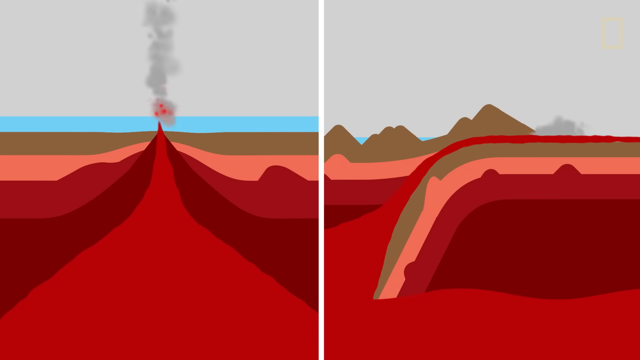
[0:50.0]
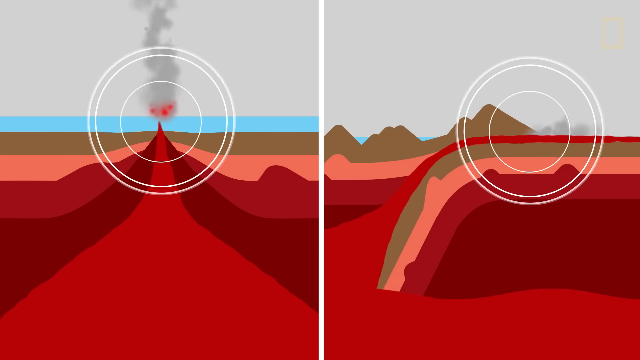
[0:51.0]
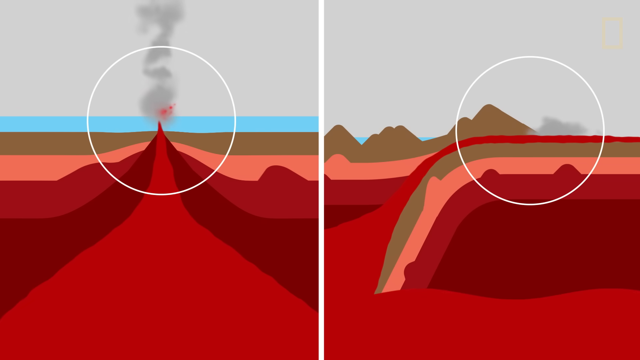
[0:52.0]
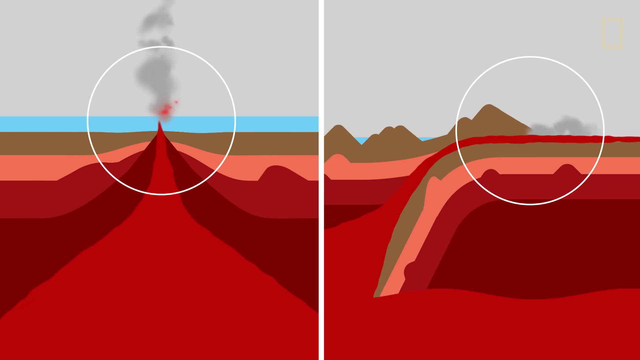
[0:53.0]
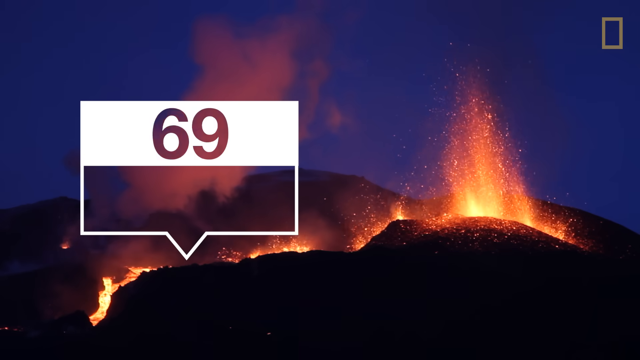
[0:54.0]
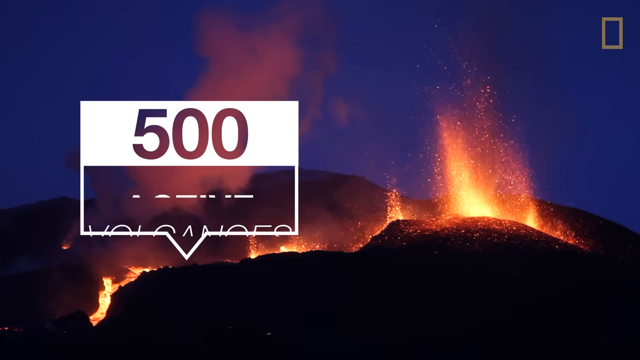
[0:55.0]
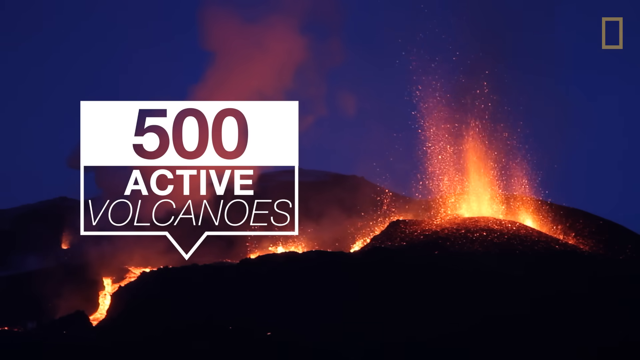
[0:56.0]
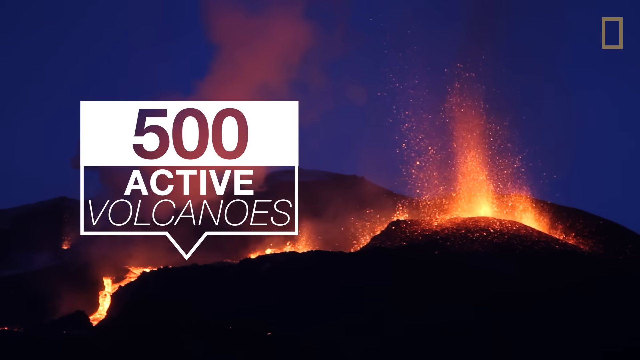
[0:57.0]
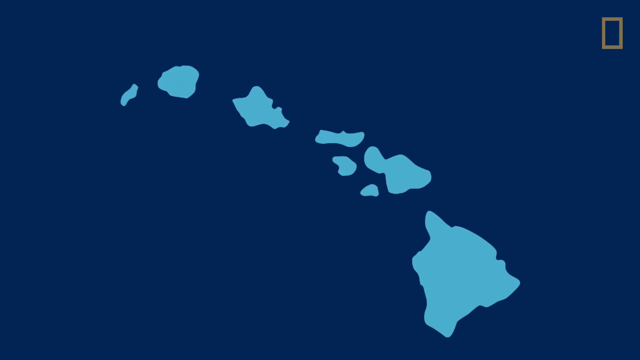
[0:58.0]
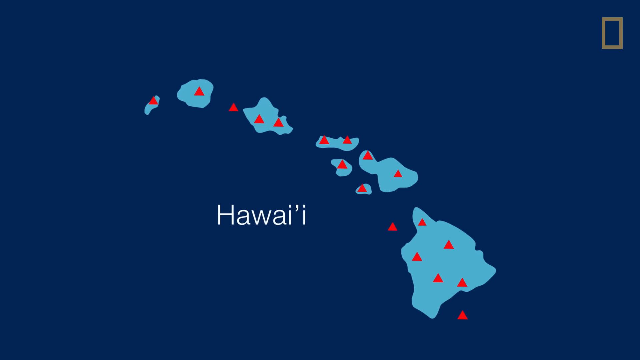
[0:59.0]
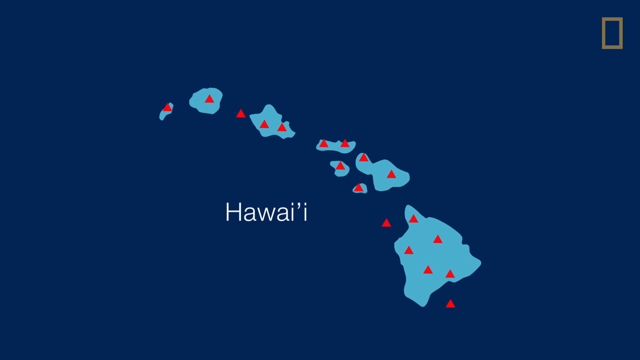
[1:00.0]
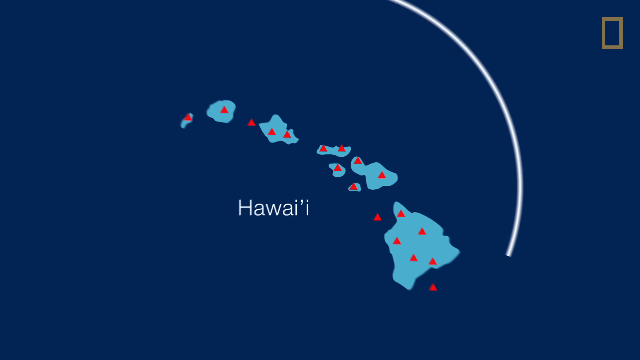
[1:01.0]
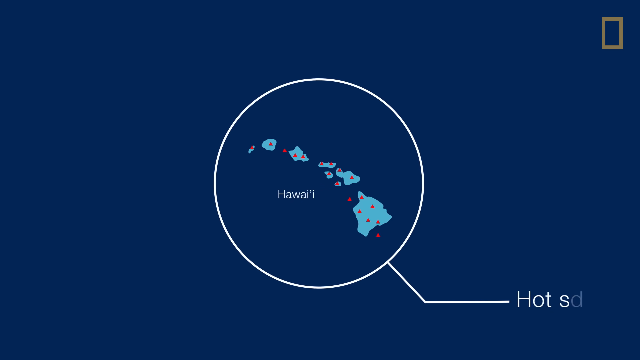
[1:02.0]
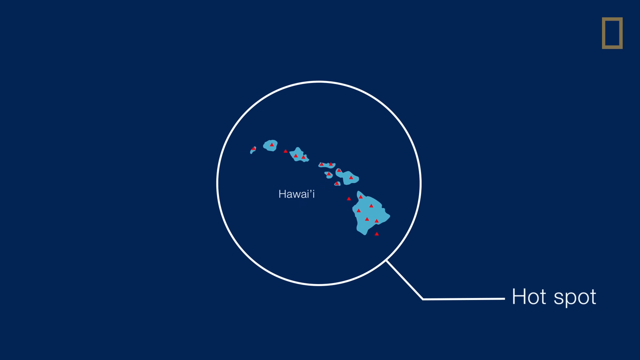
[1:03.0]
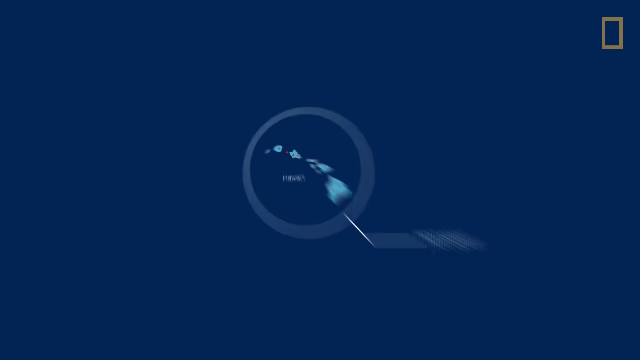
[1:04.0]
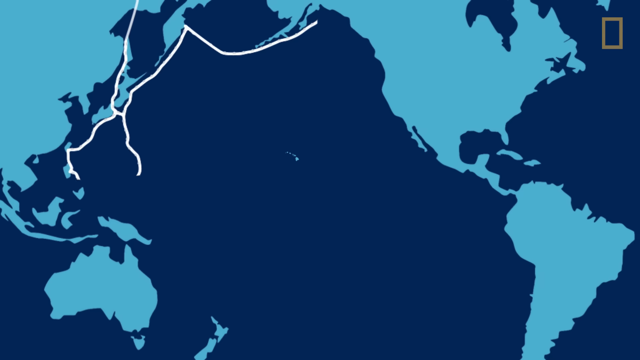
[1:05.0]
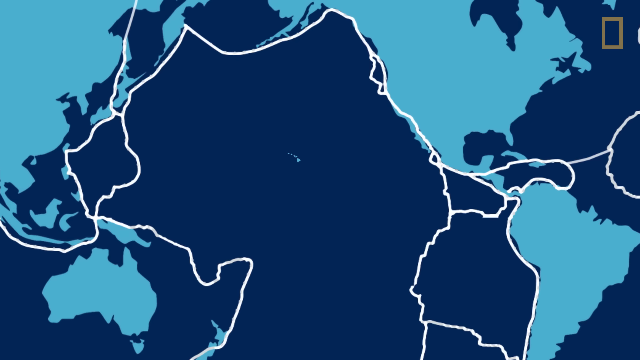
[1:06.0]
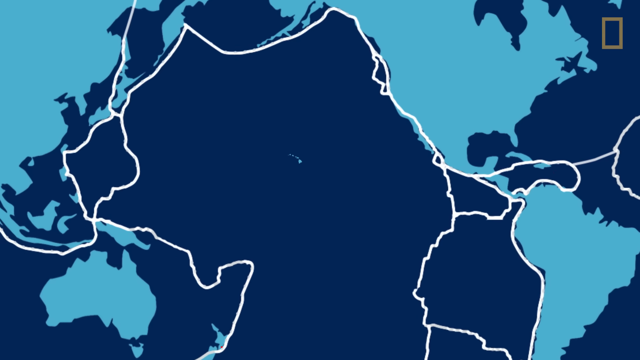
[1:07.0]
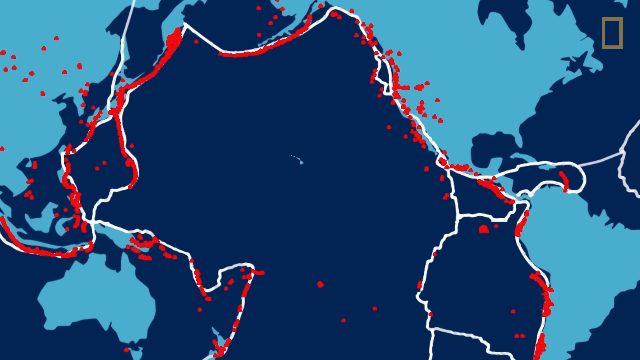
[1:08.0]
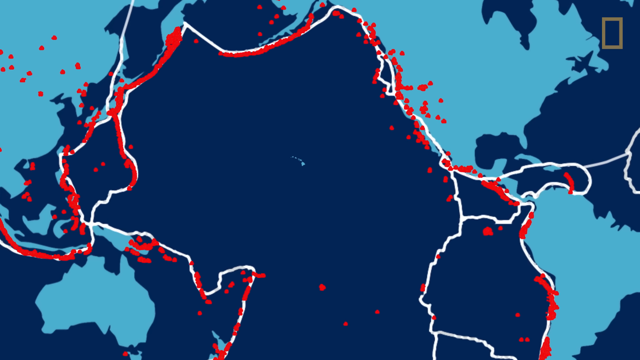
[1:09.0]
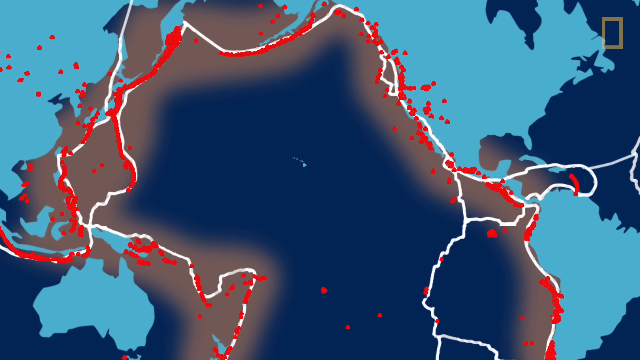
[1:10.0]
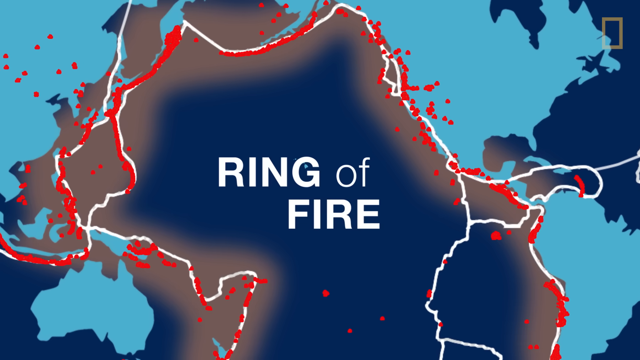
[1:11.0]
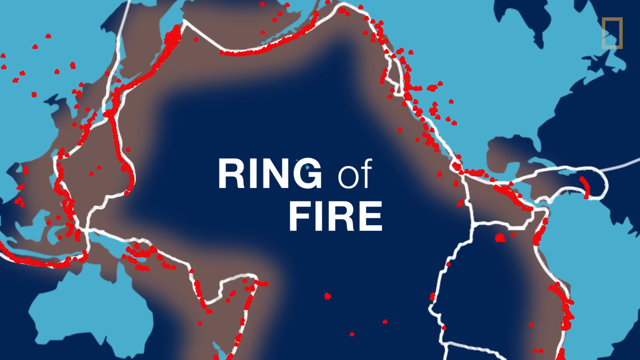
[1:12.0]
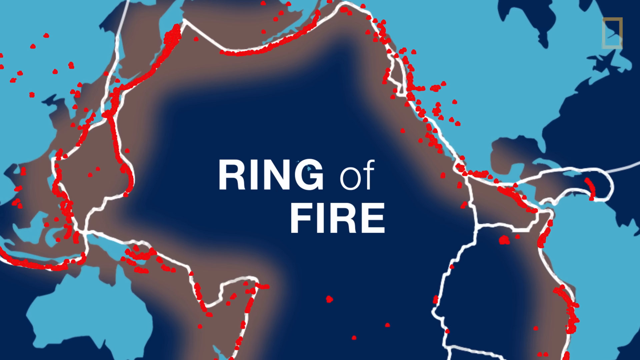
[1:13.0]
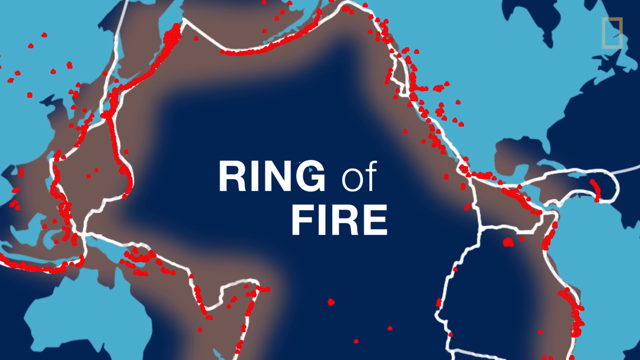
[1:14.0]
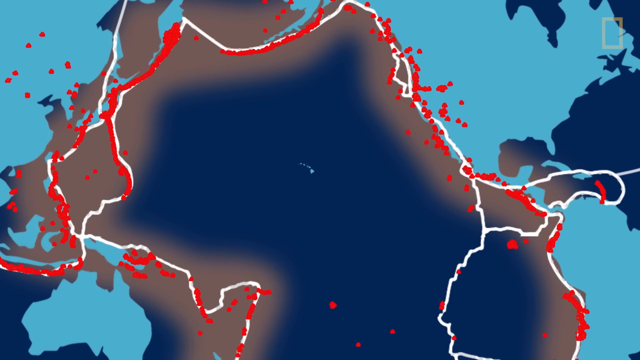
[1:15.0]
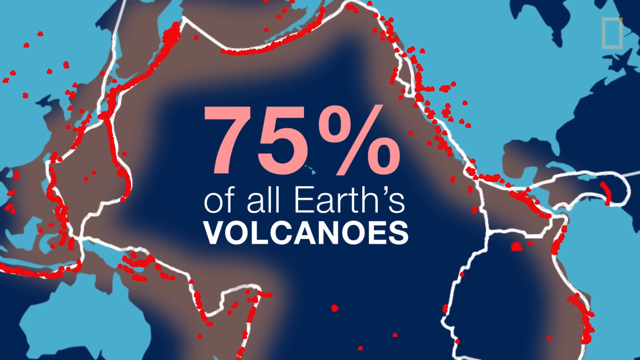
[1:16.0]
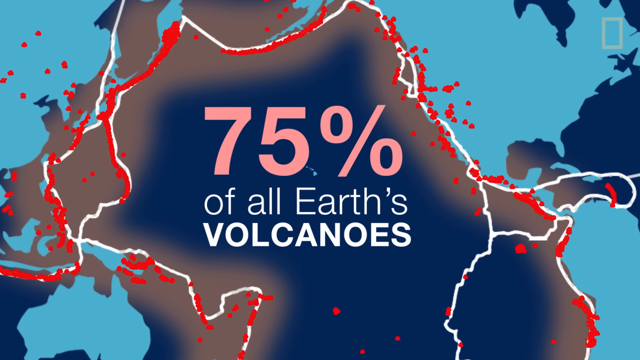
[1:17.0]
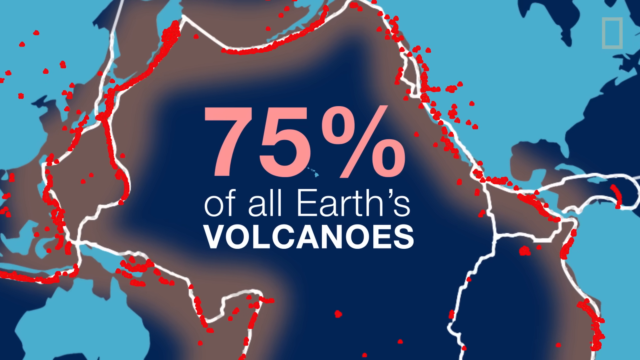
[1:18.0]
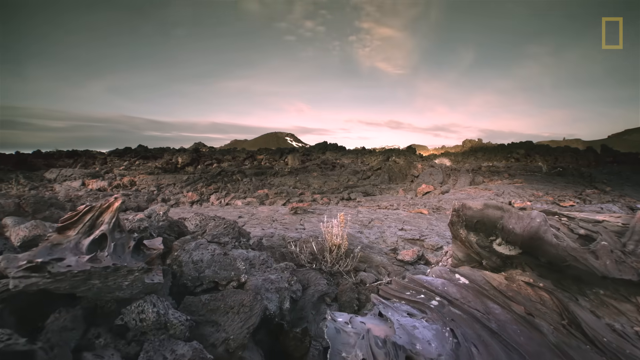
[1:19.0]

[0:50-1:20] Two cartoon diagrams appear, one on the left and one on the right: the left one shows a volcano in the distance, and the right one shows the Earth's crust and its layers. Next, a volcano across the center of a dark blue night sky shoots up yellow and orange, and text on the left side over it reads "500 active volcanoes". An overhead shot of Hawaii follows, with the landmass in light blue, the water in dark blue, and little red triangles marking volcanoes. A circle appears around it, and off to the right text reads "HOTSPOT". The view zooms out to a wider globe map with white lines across it and red dots indicating volcanoes; in the center, over the water, it says "ring of fire", and then "75% of all Earth's volcanoes" appears. The dots are all around the Pacific Ocean, with landmasses on both sides. The video then cuts to a rocky area that looks like a no-longer-active volcano.